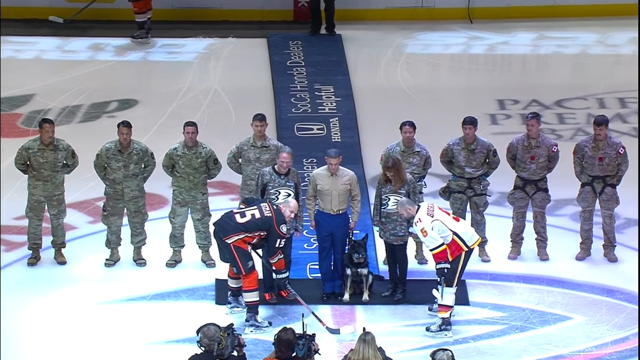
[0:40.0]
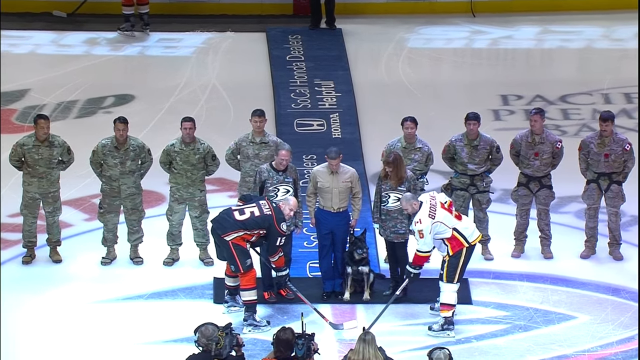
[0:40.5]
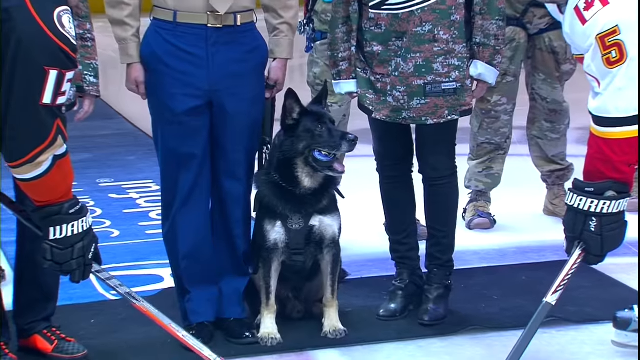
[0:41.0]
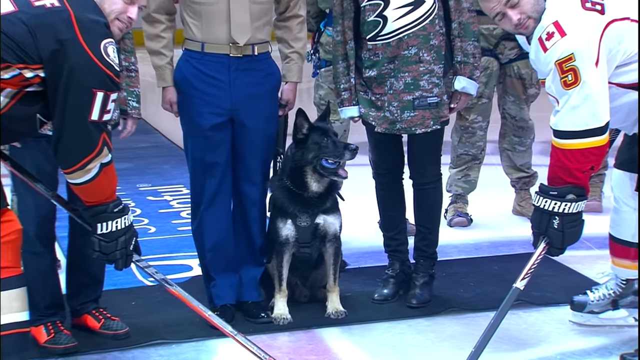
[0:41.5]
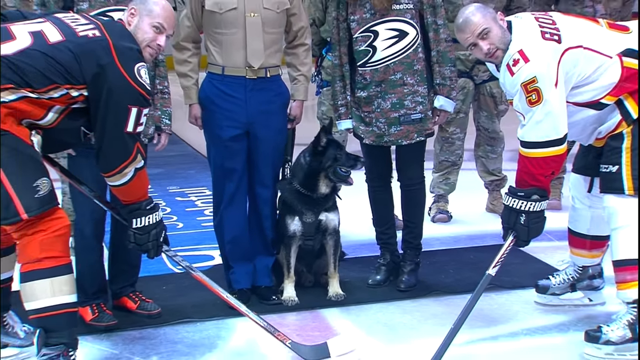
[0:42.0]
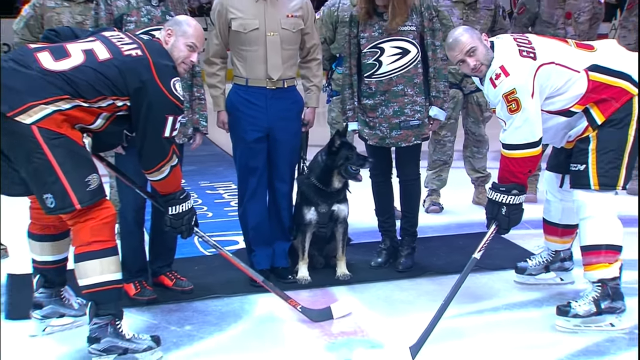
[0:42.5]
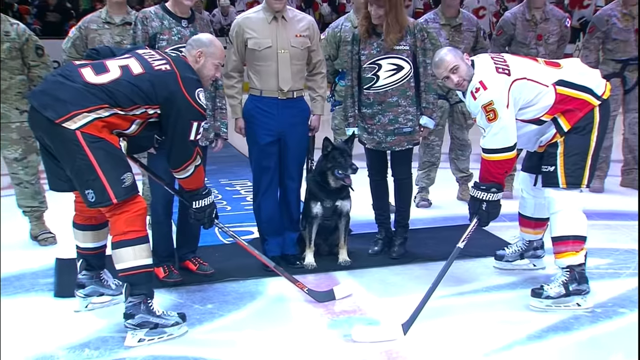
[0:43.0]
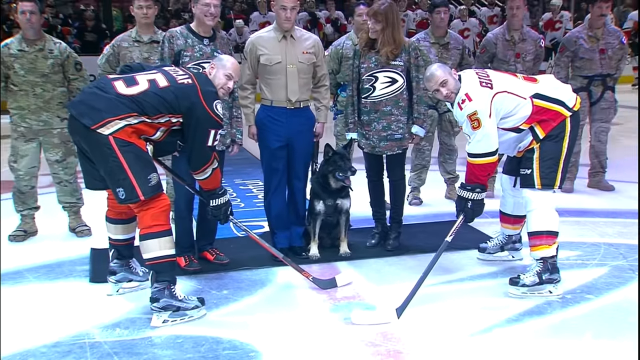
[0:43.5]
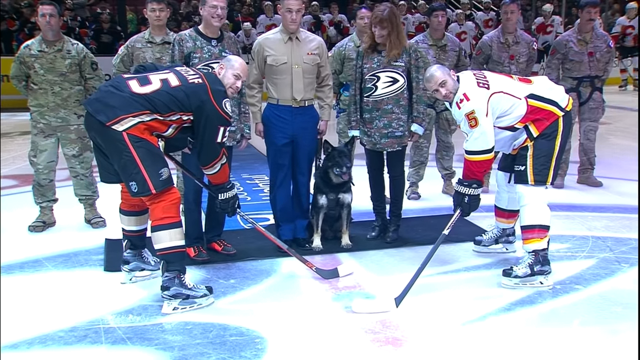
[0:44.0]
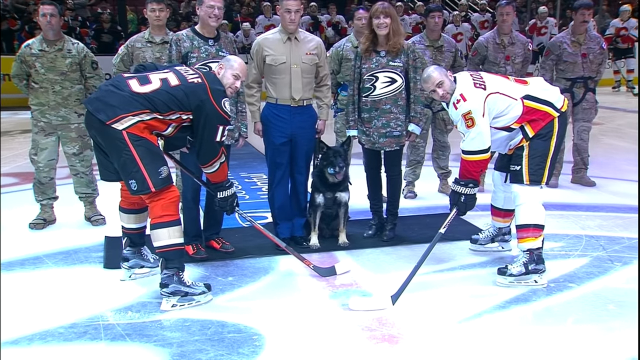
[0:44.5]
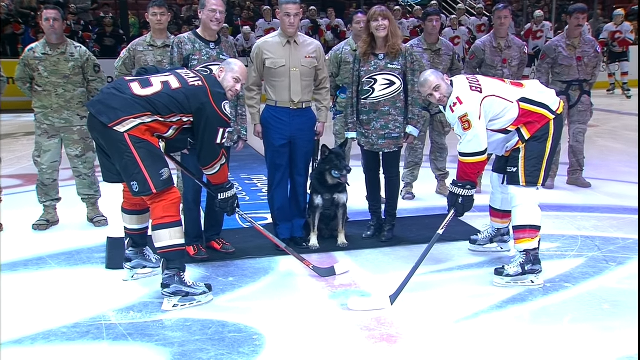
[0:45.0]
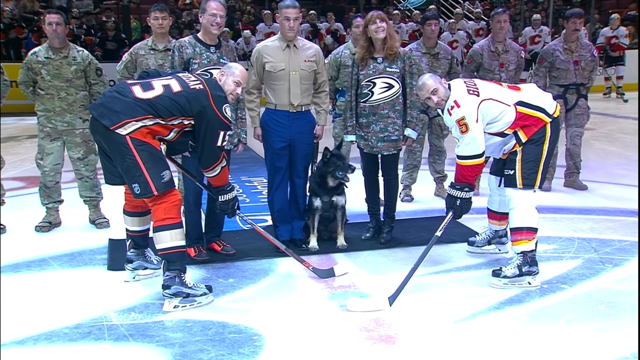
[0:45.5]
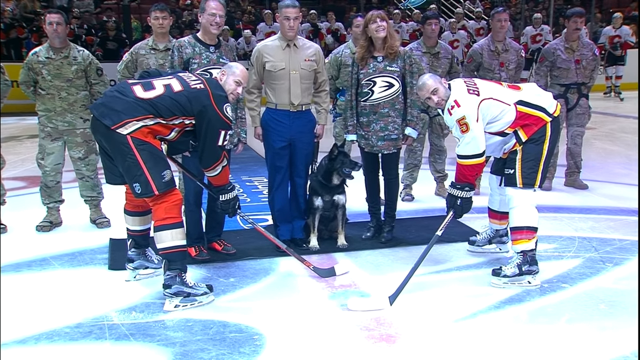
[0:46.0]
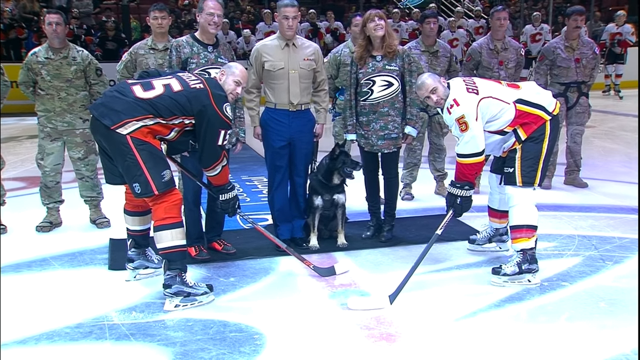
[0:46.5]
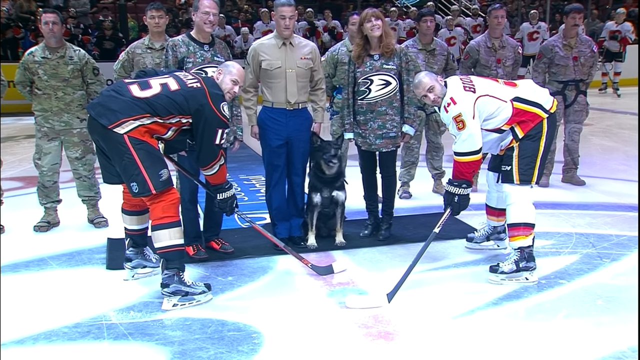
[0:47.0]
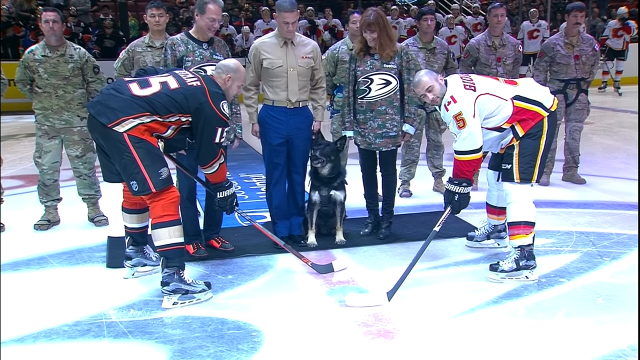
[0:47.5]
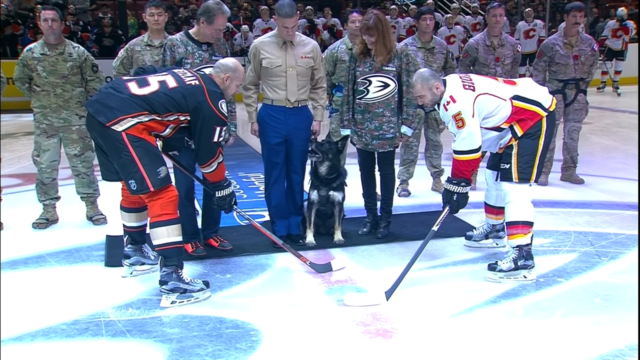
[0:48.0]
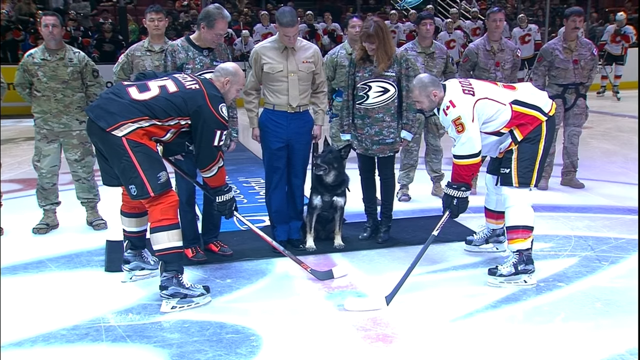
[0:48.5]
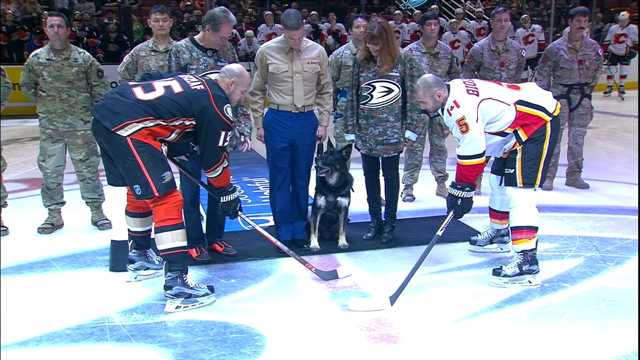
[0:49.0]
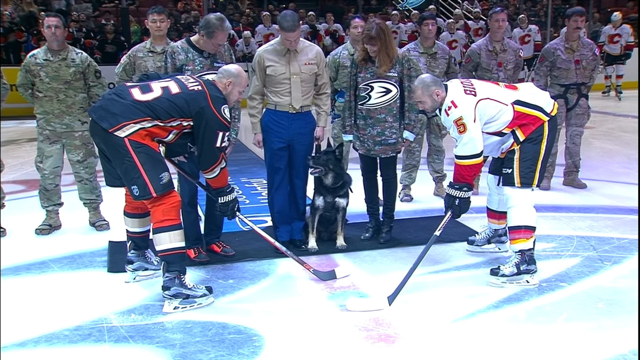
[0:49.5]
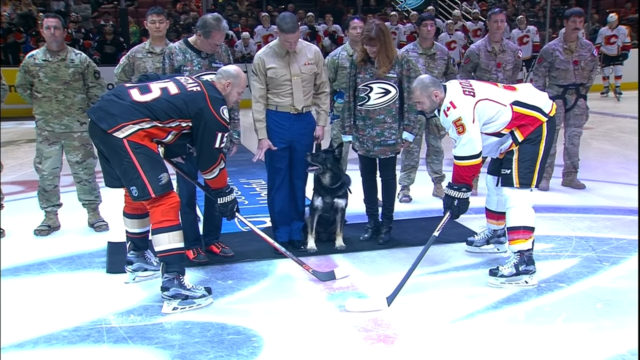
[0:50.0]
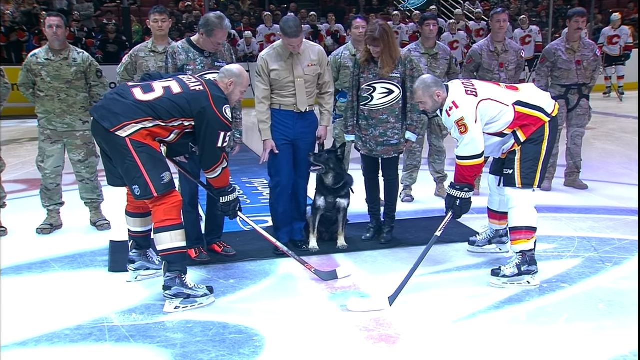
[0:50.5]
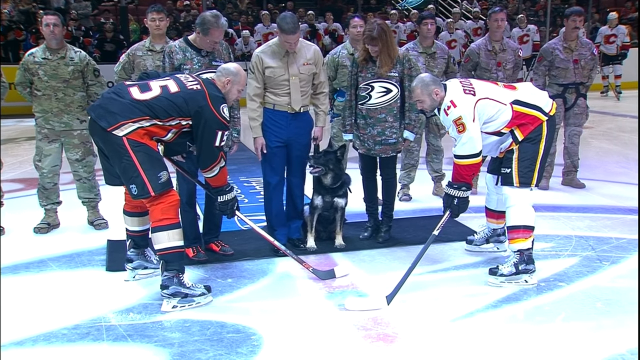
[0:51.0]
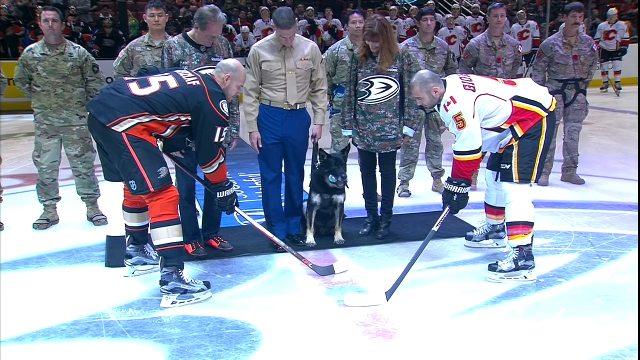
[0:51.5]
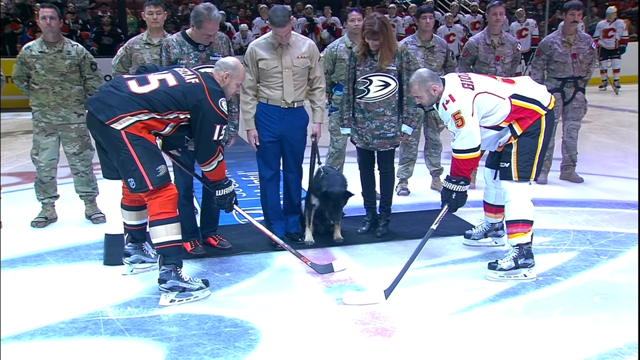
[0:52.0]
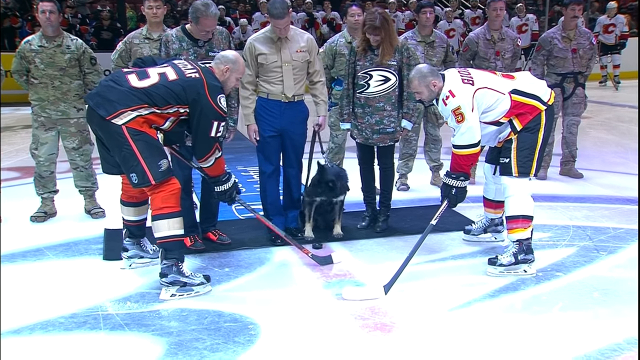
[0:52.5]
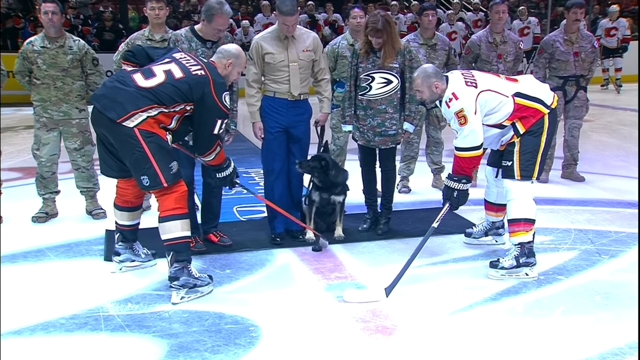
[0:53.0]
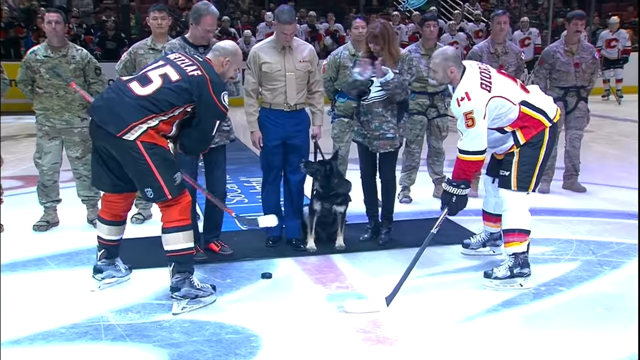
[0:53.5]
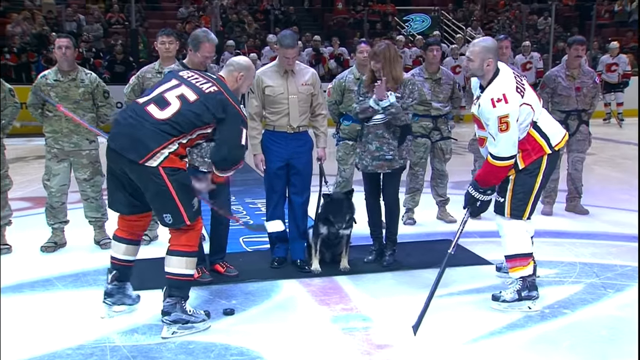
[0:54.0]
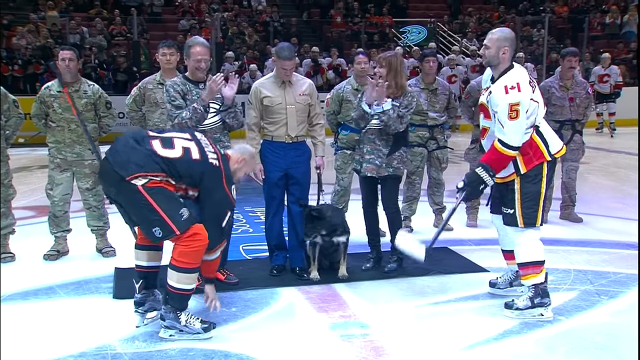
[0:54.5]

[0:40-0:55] An aerial view of what appears to be a gymnasium shows eight people in the background fully clad in US Army clothing. In front of them three people stand. The people on the left and right both wear jeans and a long-sleeve army-colored shirt. The man between them in the center wears a long-sleeved tan shirt and dark blue pants, and a dog is sitting beside him. A hockey player in black and orange is on the left side in front of the man with the dog, and another hockey player in a red and white outfit faces him on the right side. Both have their hockey sticks down on the ground in front of the dog. The dog appears to have a hockey puck in its mouth and looks at the hockey players. The camera zooms in on the dog, then zooms out and shows a different angle of the group, who all appear to be posing, looking in the same direction toward the camera but slightly off center to the right. The dog looks around in different directions and then drops the hockey puck. Everyone suddenly starts clapping, and the hockey player in the black and orange suit reaches down and picks up the puck.